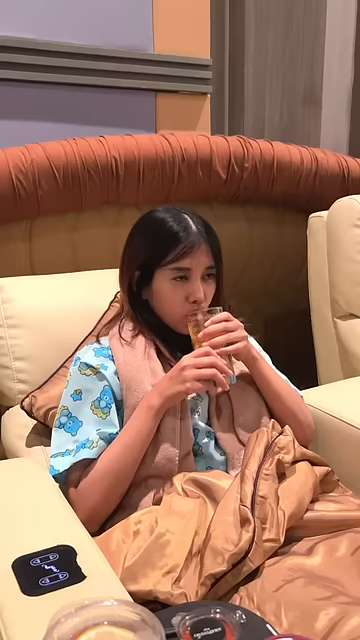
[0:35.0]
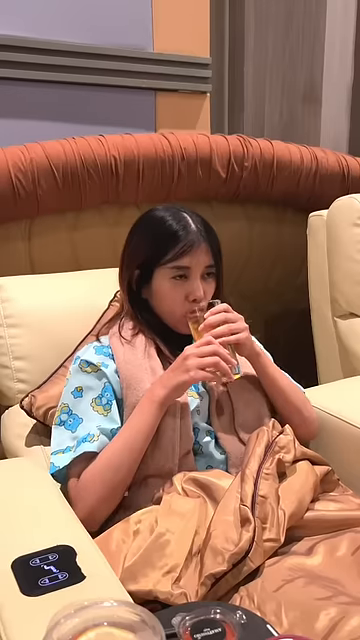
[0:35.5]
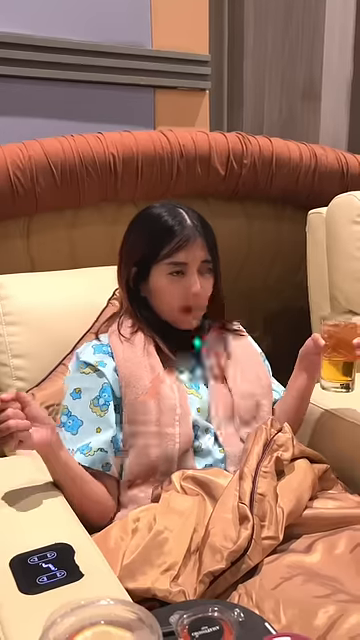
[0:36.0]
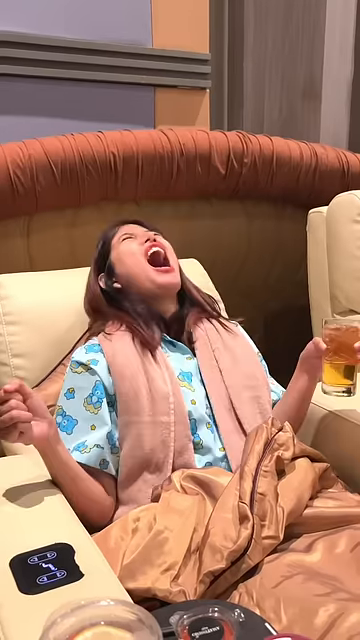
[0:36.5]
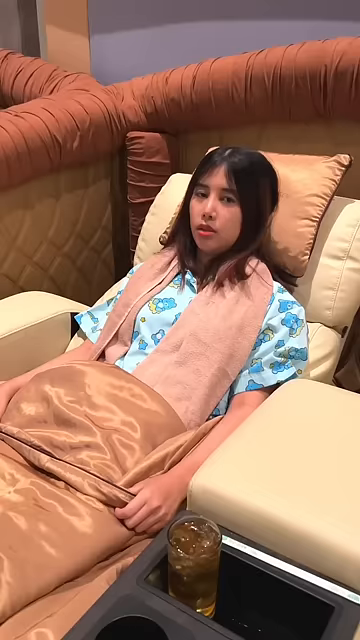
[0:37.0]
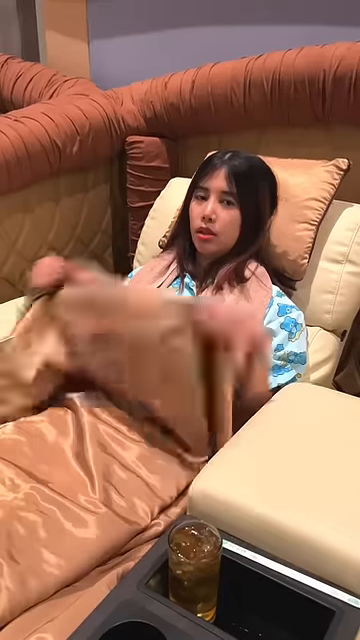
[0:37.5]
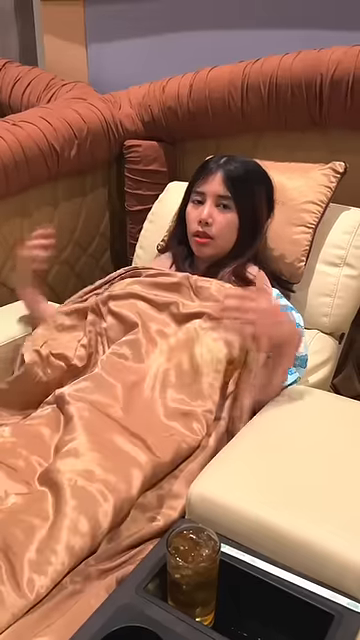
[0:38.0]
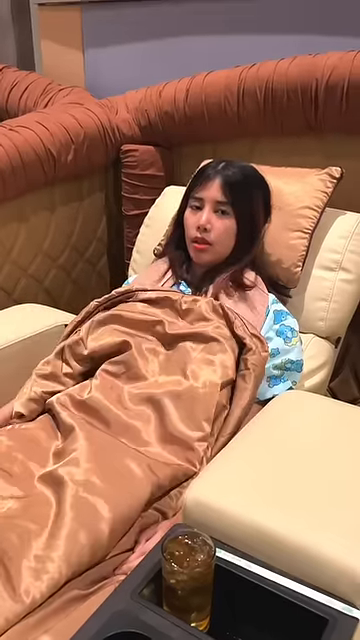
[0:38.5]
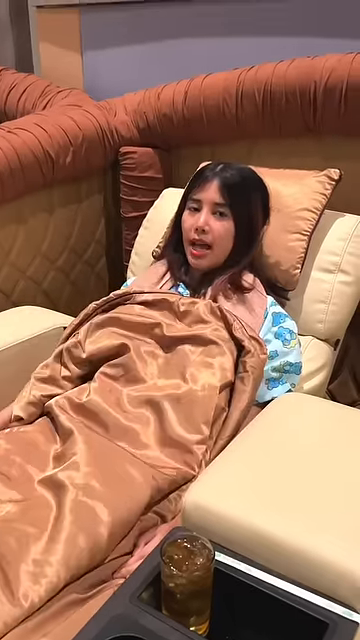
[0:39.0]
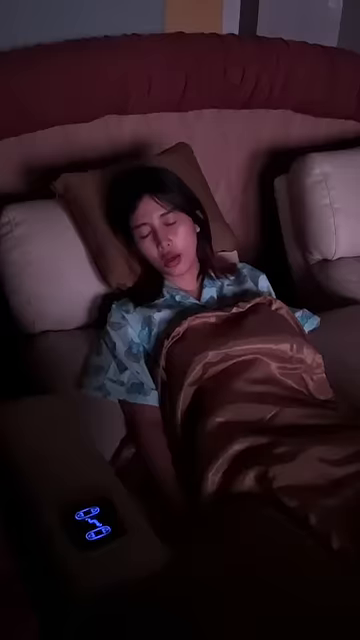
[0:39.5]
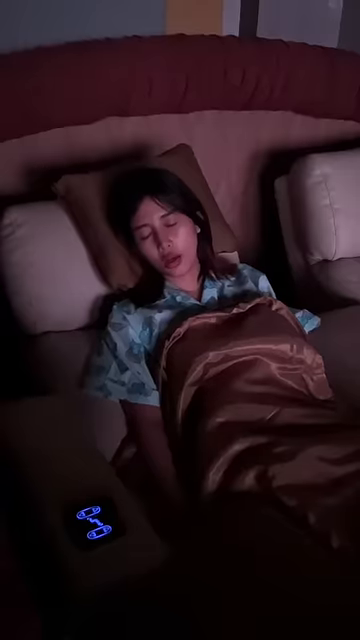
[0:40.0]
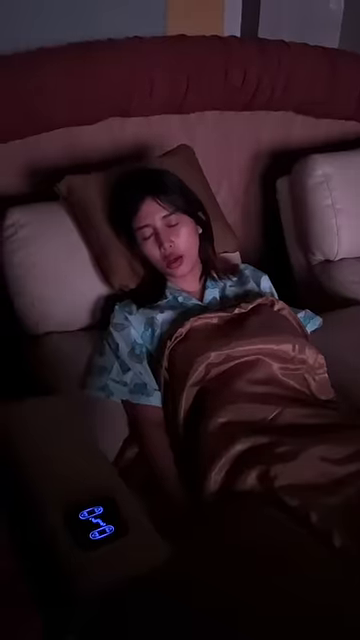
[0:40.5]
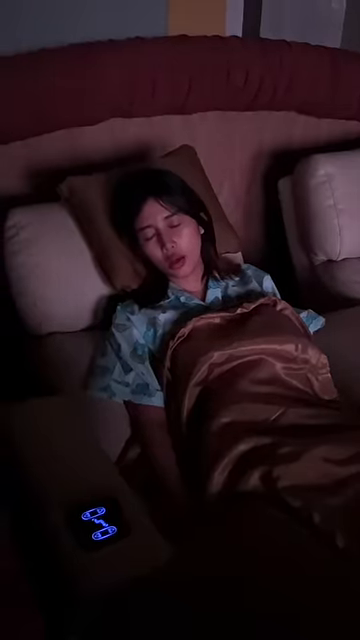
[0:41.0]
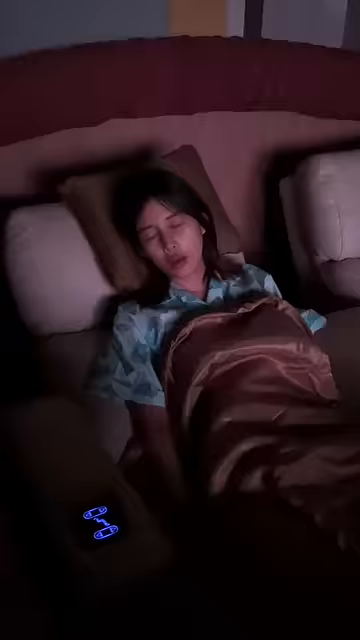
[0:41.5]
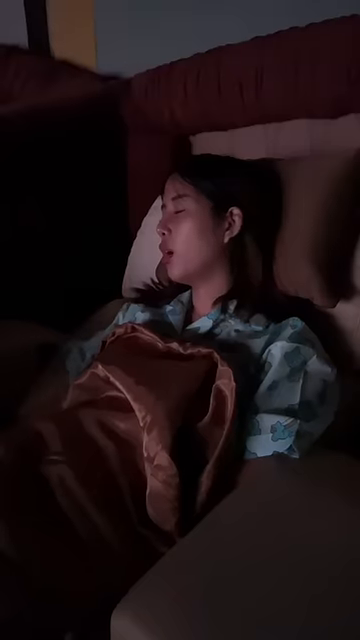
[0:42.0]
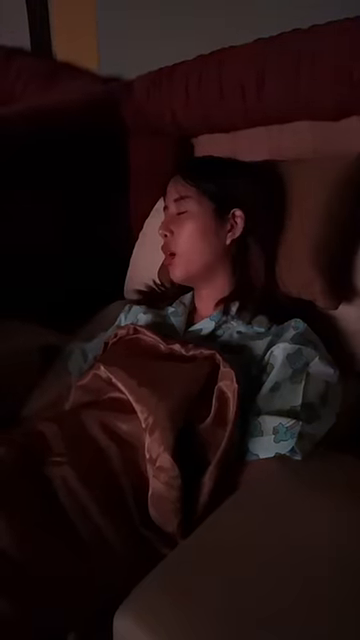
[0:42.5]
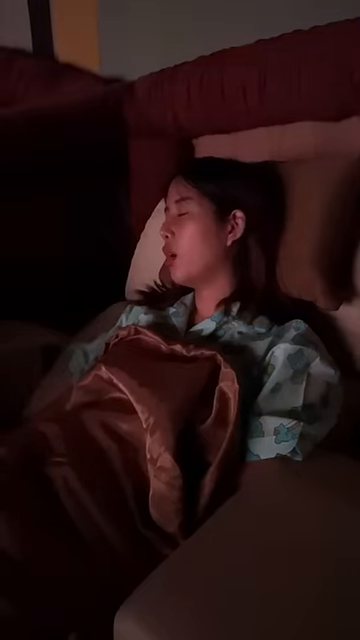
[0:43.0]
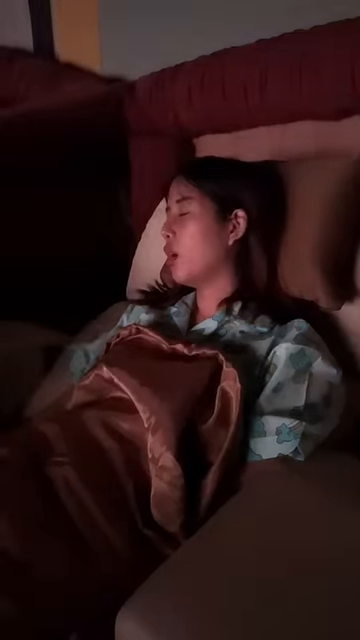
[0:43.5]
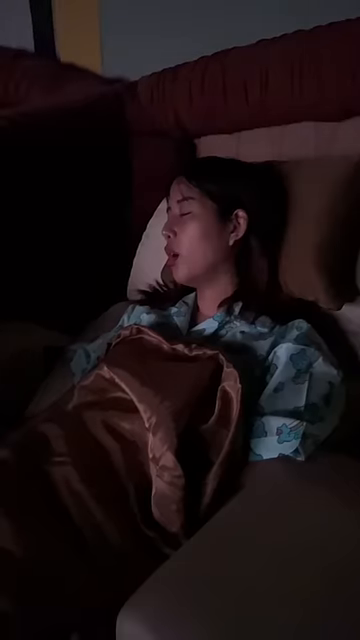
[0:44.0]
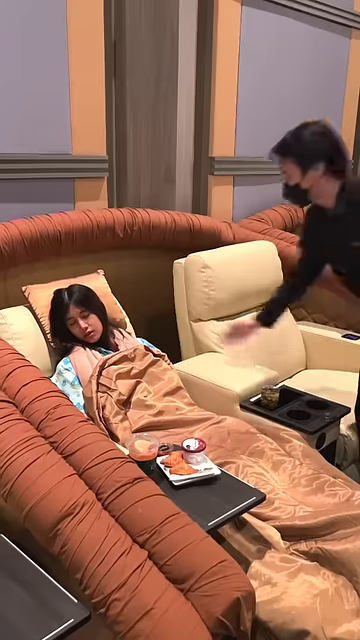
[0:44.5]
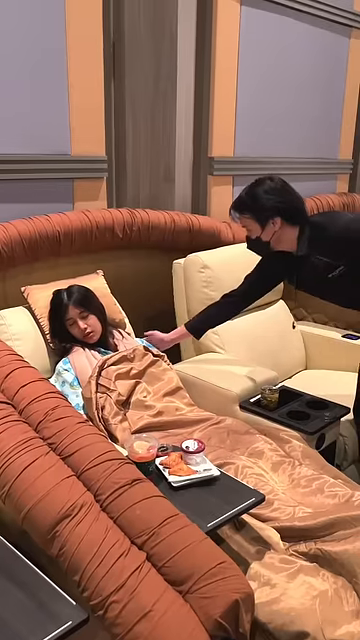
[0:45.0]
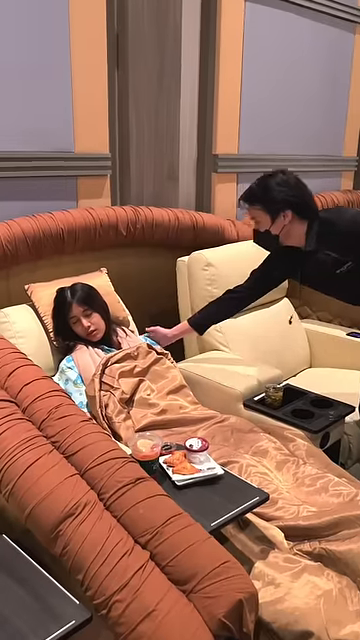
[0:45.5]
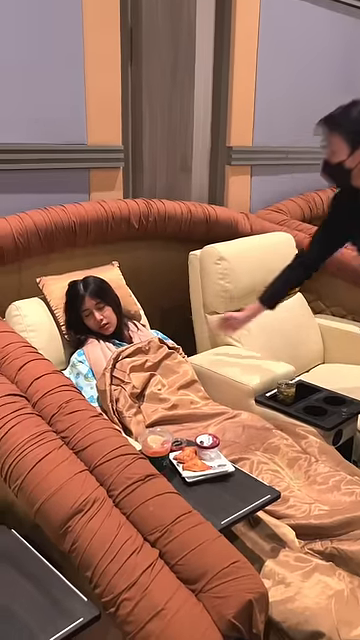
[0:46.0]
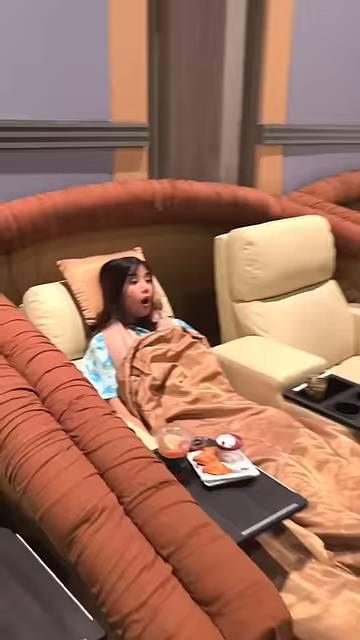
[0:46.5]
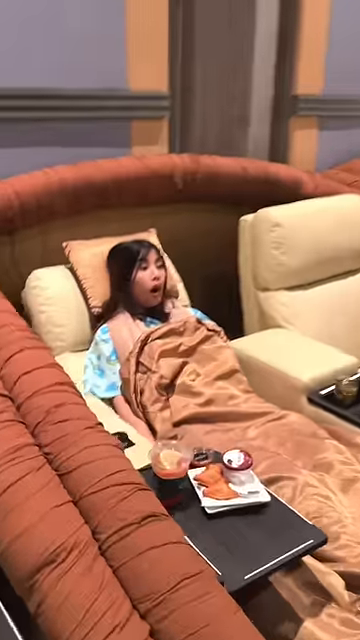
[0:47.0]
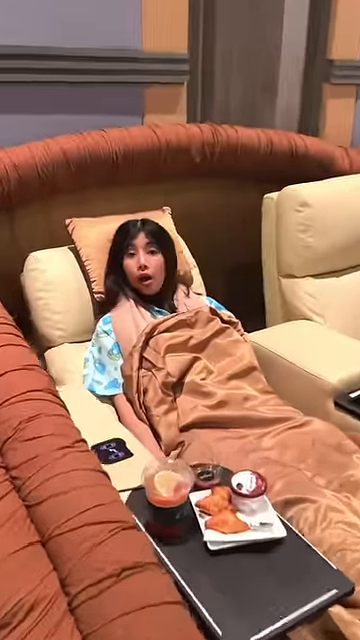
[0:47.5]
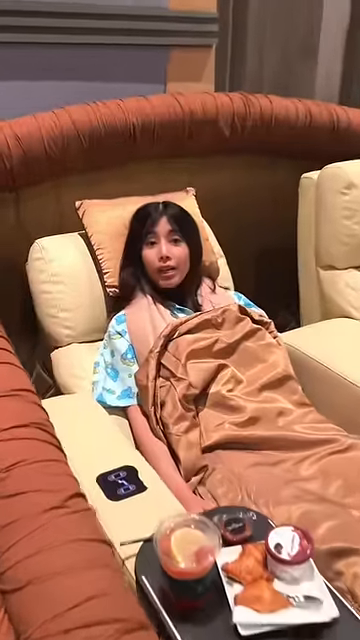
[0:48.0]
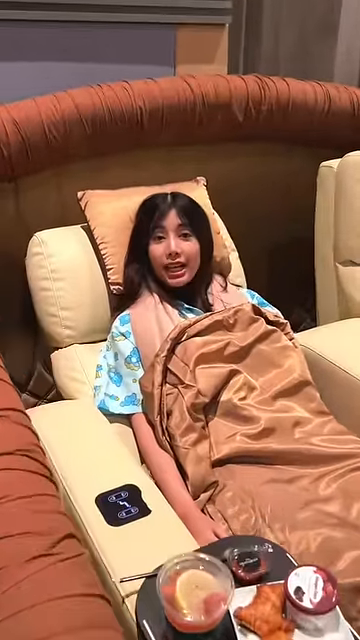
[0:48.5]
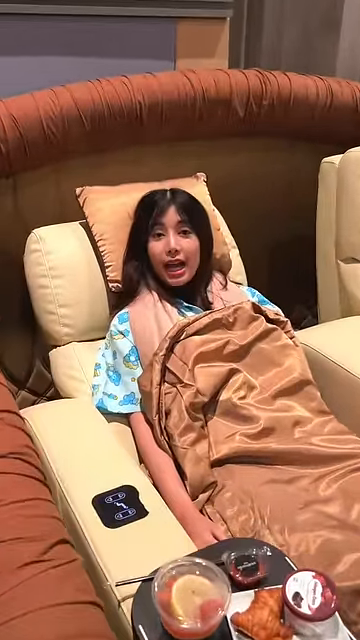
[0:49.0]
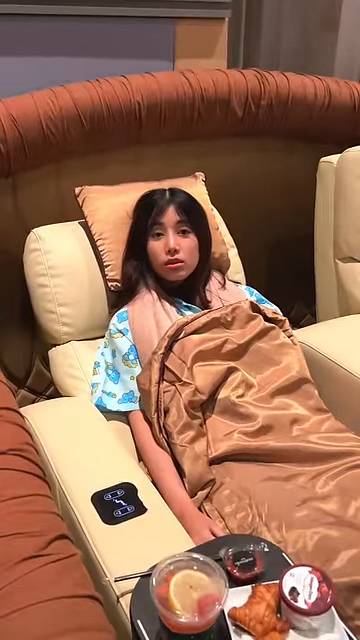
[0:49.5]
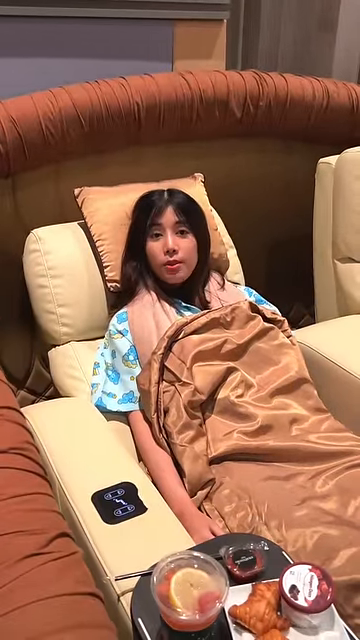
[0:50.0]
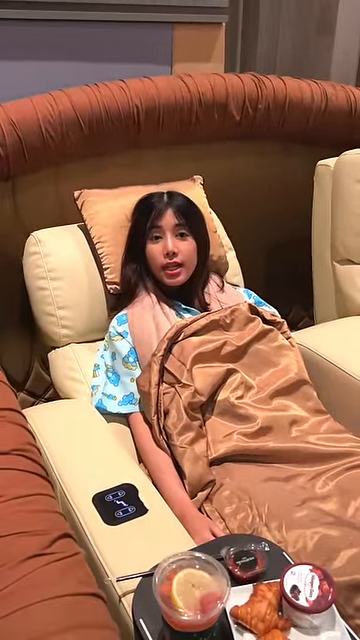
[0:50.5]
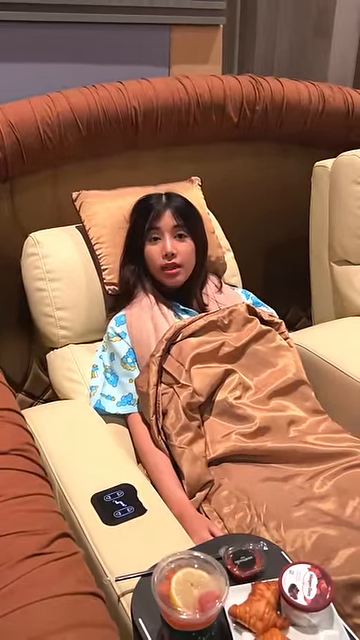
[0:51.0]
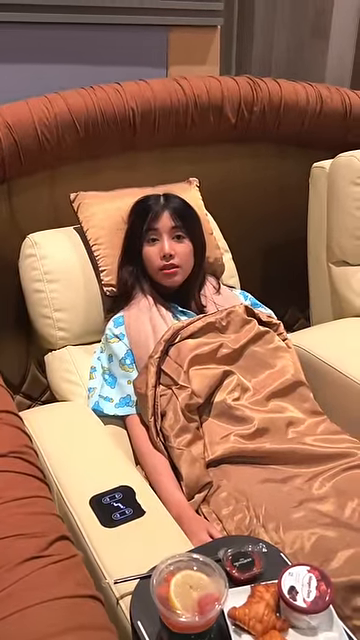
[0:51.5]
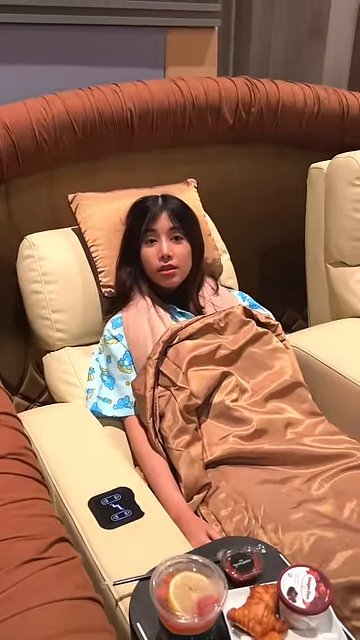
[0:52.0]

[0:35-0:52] The woman sits watching the movie, drinking something that looks like maybe tea, all covered up with her blanket. The scene then changes to darkness, where she is sleeping in the movie chair, apparently snoring, with the screen's reflection visible on her face. Someone from the theater comes and wakes her up; the person is wearing a mask. The place does not look crowded, and she seems to be the only one there. The seats are partitioned off in groups of two.